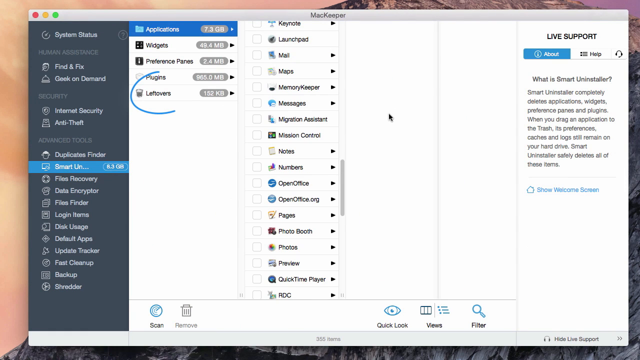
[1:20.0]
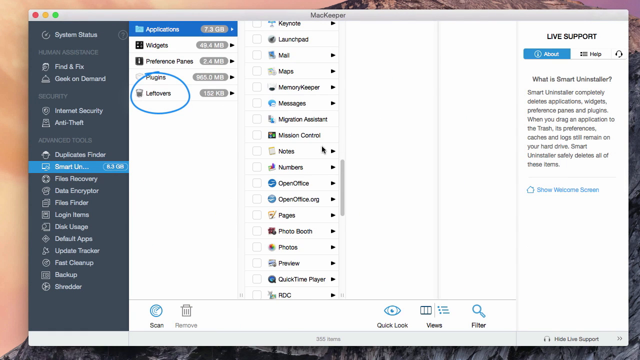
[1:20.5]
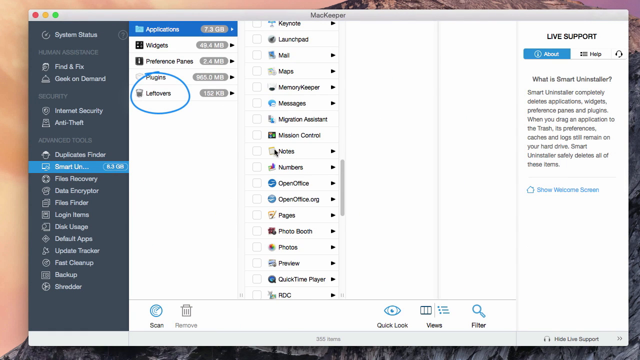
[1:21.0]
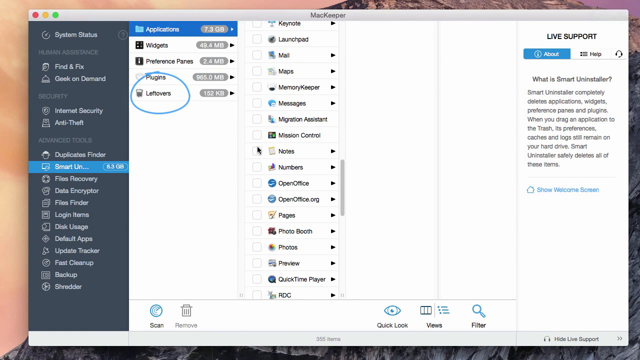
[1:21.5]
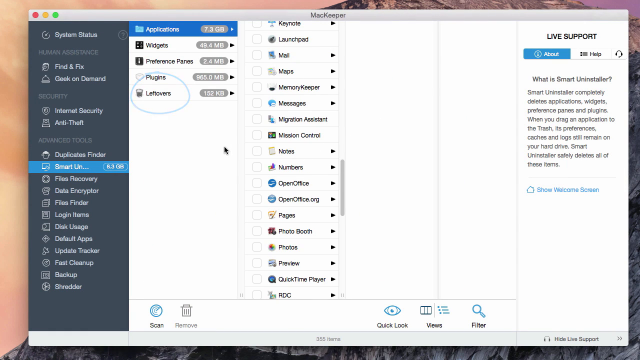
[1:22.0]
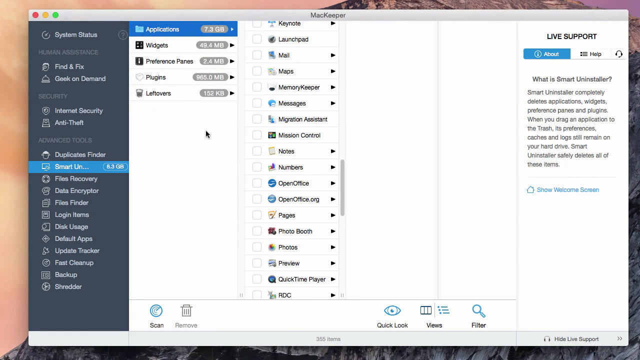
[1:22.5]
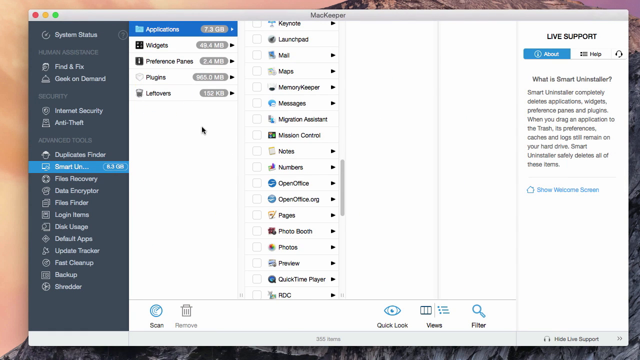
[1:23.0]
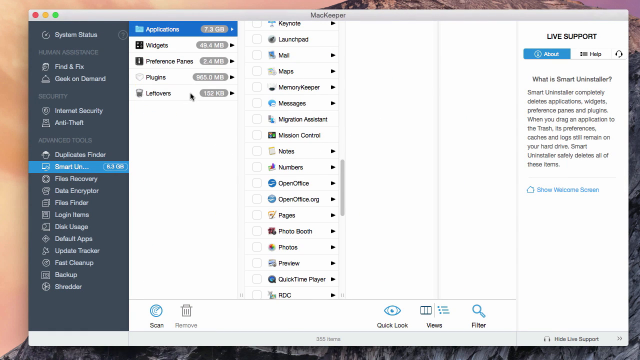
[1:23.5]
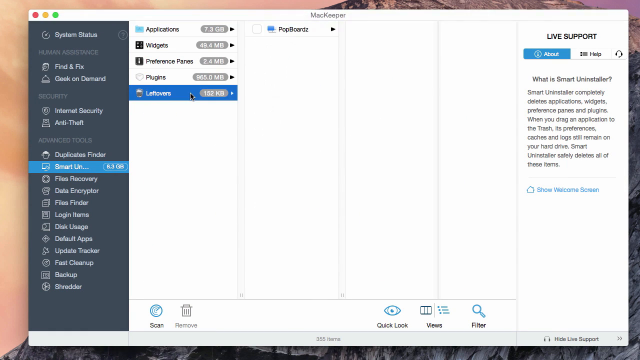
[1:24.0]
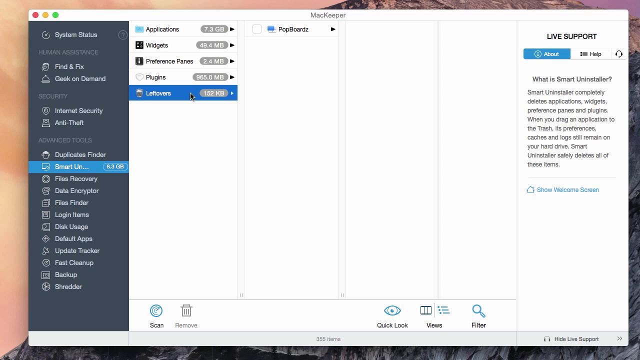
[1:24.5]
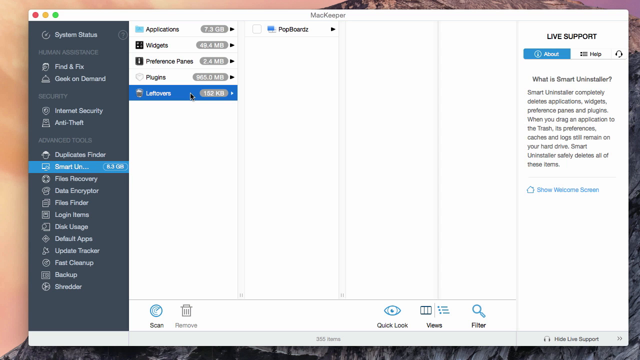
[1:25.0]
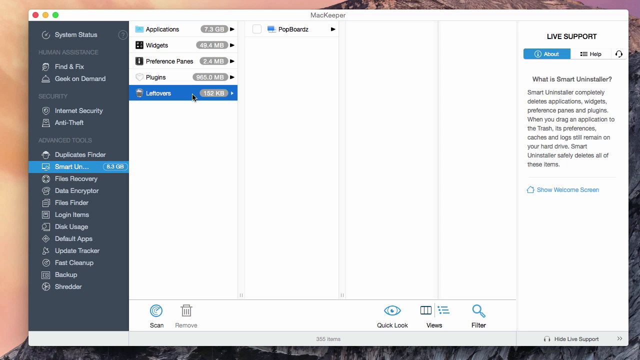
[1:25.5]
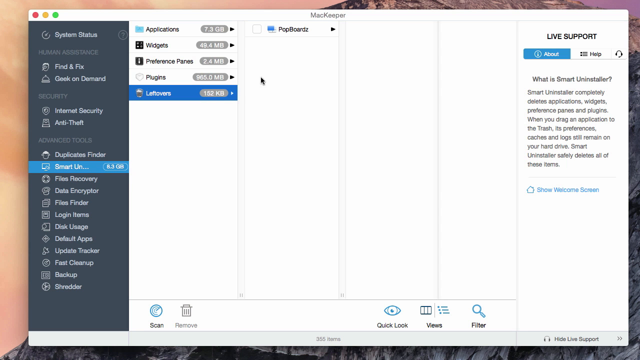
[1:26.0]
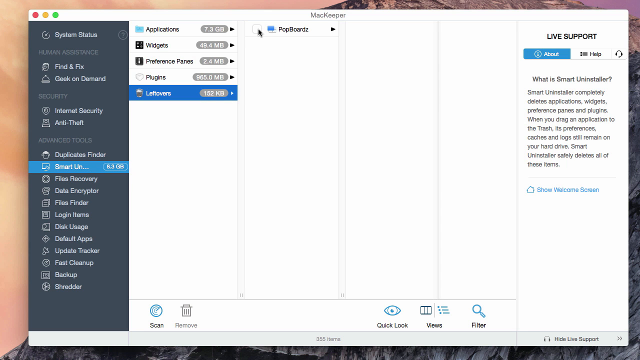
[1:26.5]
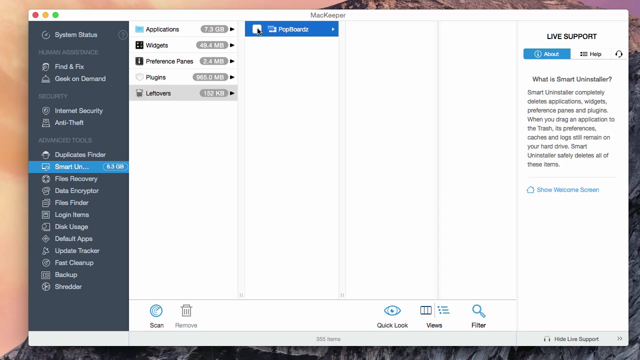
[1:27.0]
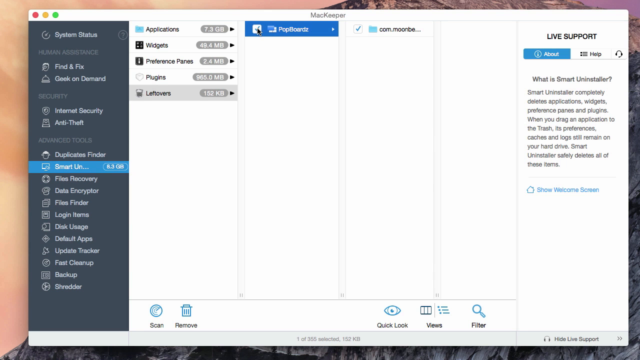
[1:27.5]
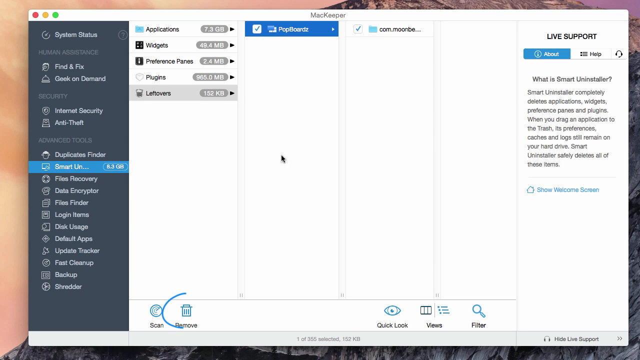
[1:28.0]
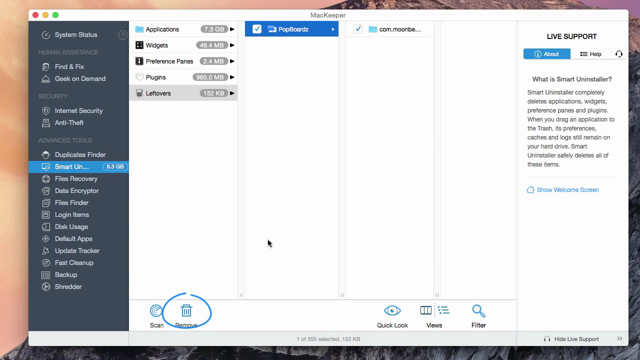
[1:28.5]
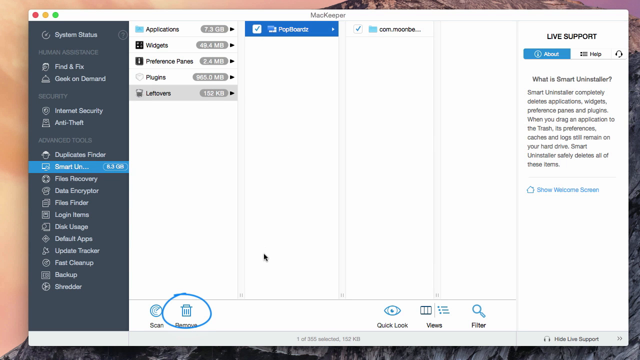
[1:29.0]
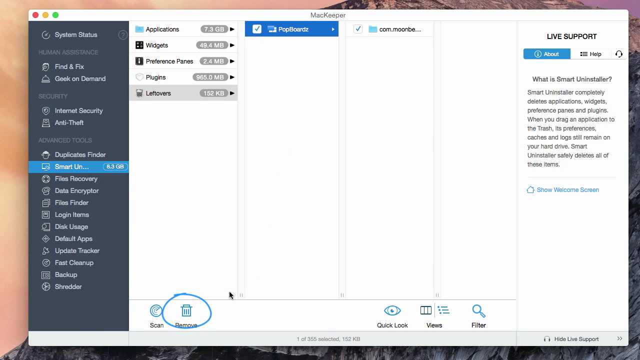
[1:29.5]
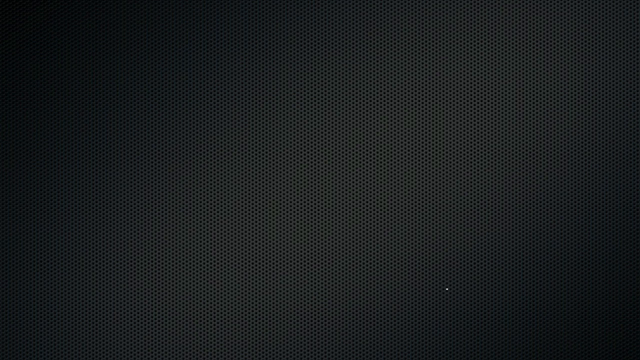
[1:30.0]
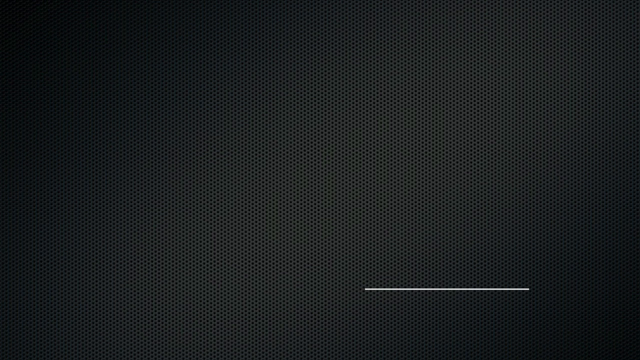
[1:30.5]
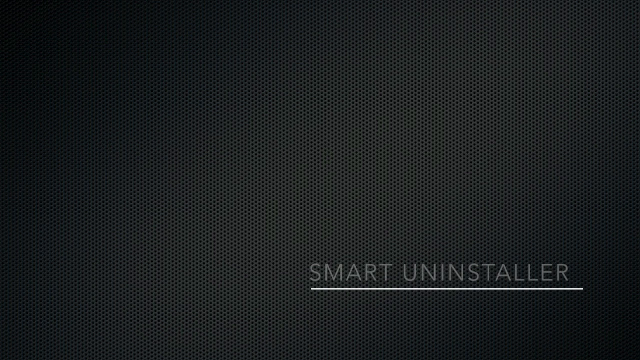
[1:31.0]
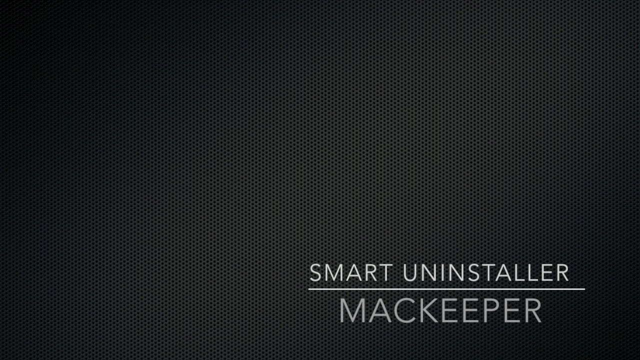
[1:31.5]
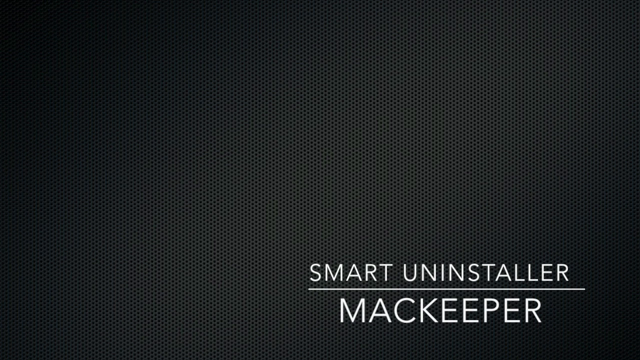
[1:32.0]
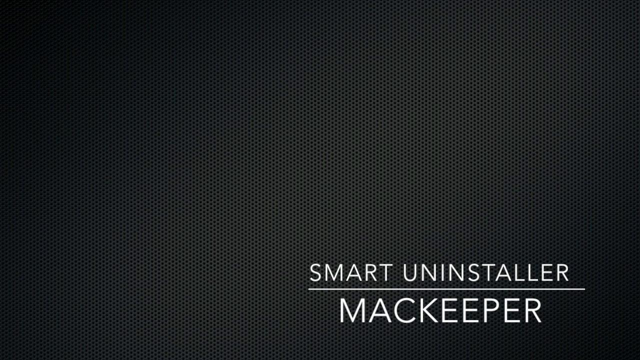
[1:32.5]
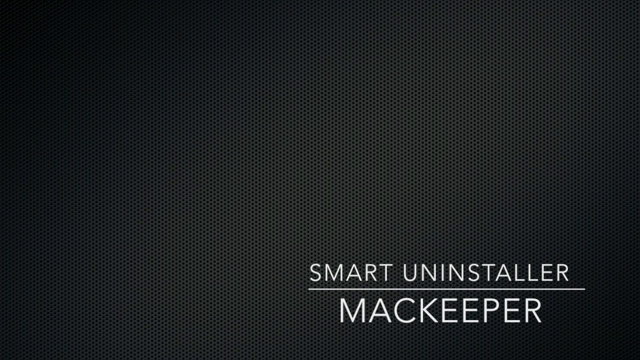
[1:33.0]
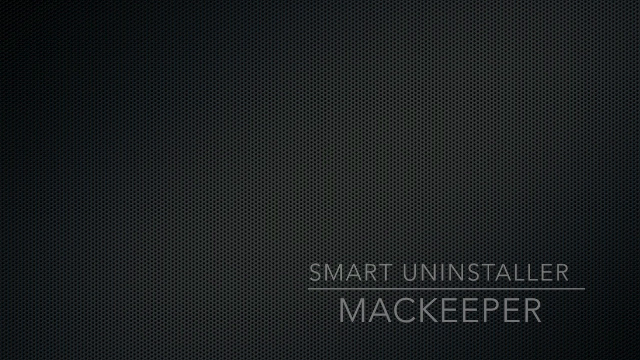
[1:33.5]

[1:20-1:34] The blue circle continues to form around the Plugins and Leftovers section of the MacKeeper software, and the user moves the mouse up toward Leftovers. Clicking Leftovers brings up one application, called PopBoardz. The user clicks the empty white box beside it, and a blue checkmark appears. A blue circle then appears around the Remove symbol at the bottom. As the mouse moves down toward the Remove button, the carbon fiber background appears over the screen, and the text "Smart Uninstaller MacKeeper" appears again in the bottom right.